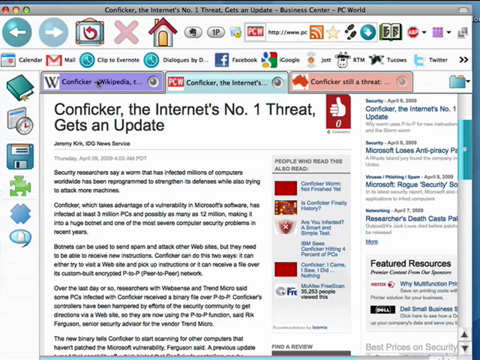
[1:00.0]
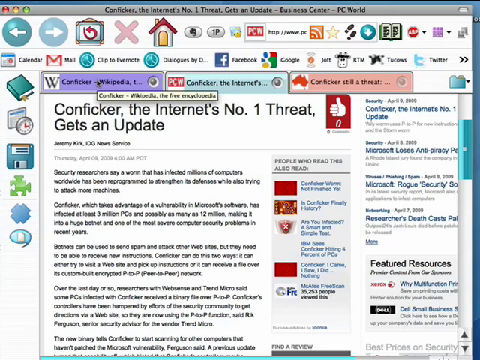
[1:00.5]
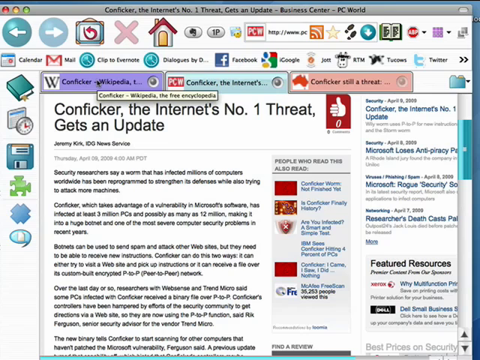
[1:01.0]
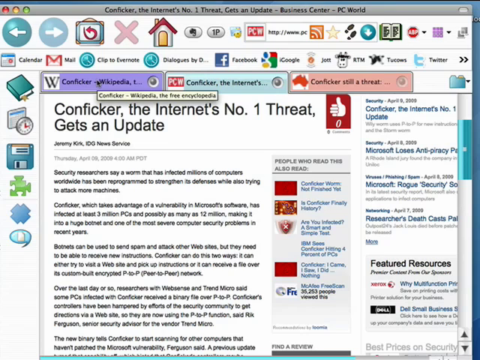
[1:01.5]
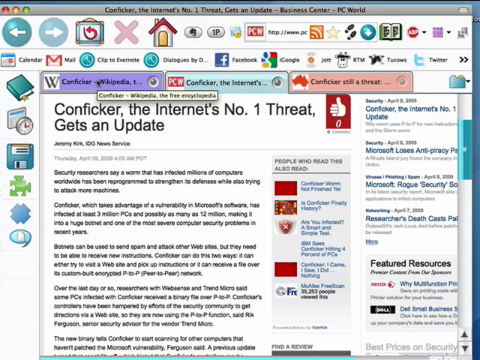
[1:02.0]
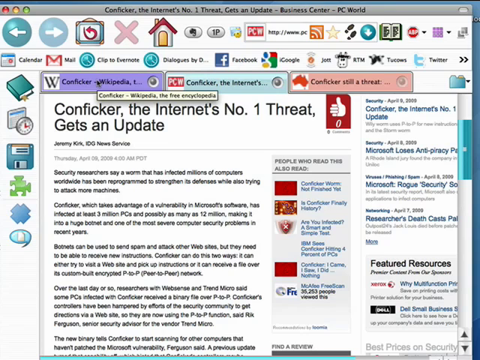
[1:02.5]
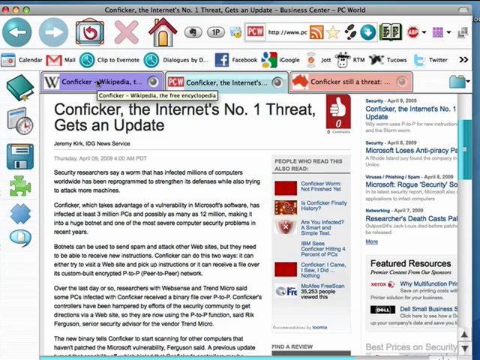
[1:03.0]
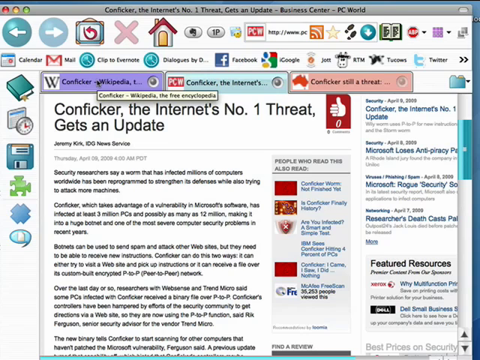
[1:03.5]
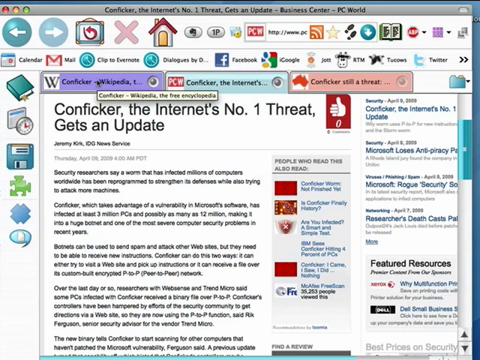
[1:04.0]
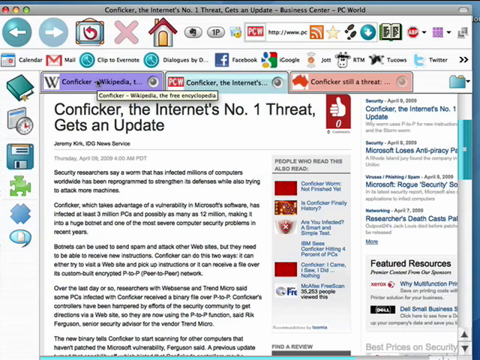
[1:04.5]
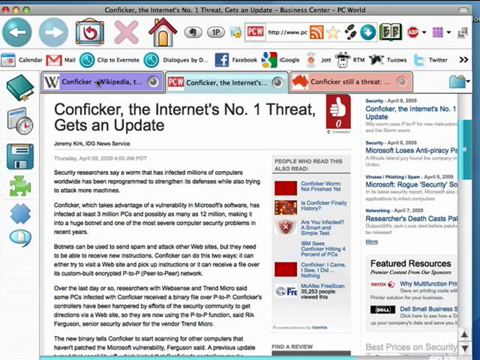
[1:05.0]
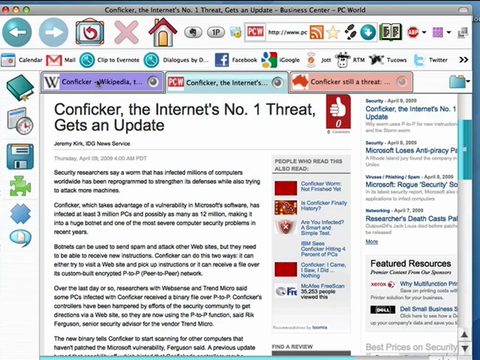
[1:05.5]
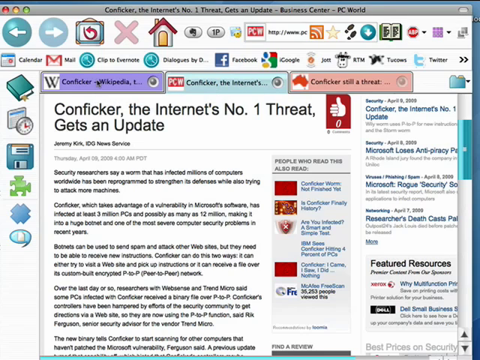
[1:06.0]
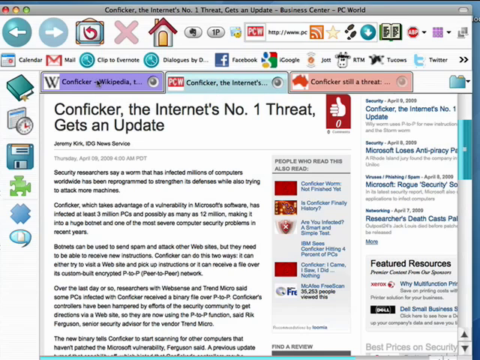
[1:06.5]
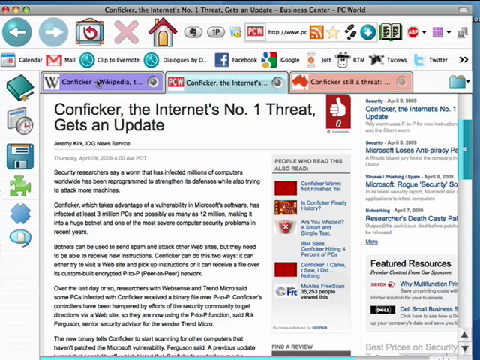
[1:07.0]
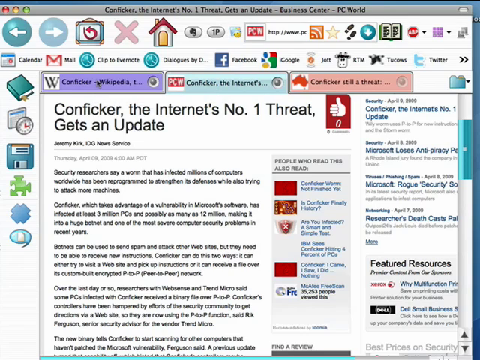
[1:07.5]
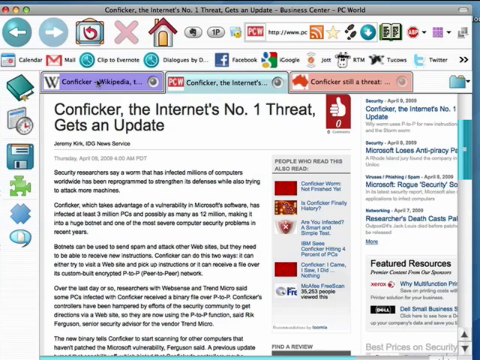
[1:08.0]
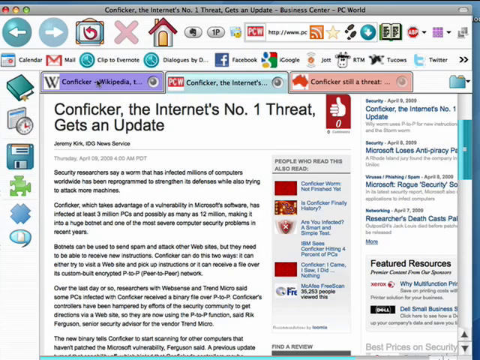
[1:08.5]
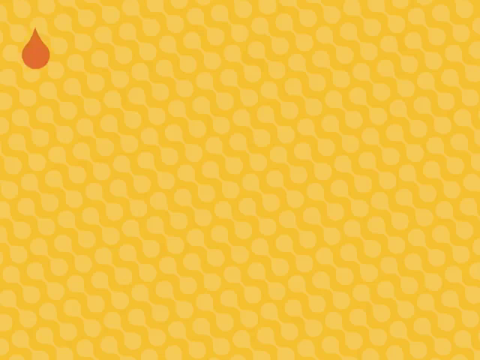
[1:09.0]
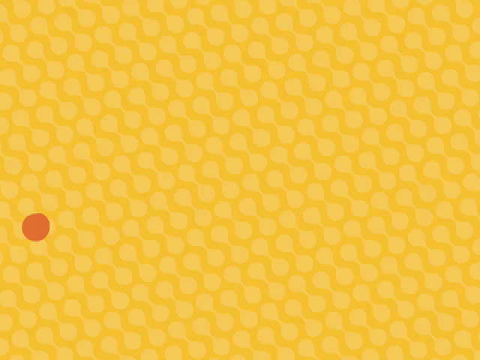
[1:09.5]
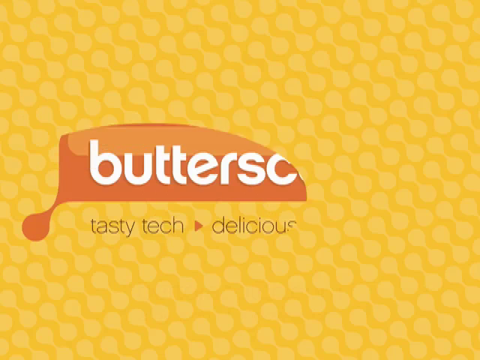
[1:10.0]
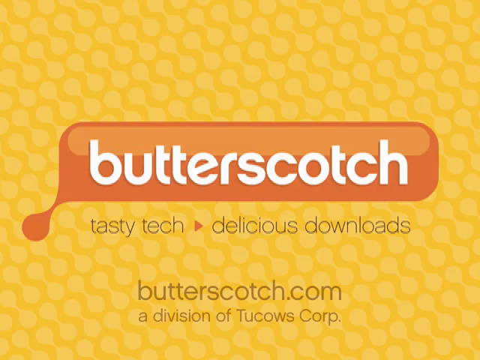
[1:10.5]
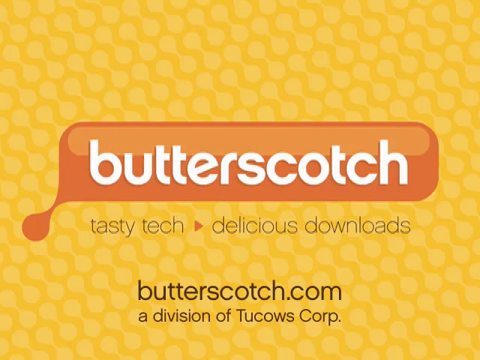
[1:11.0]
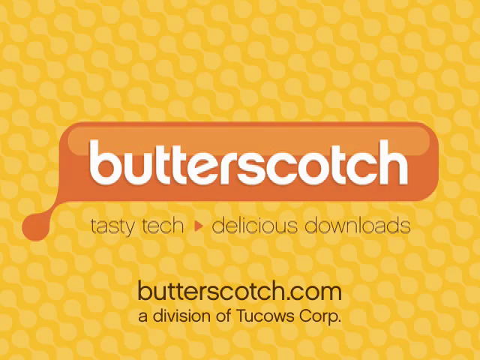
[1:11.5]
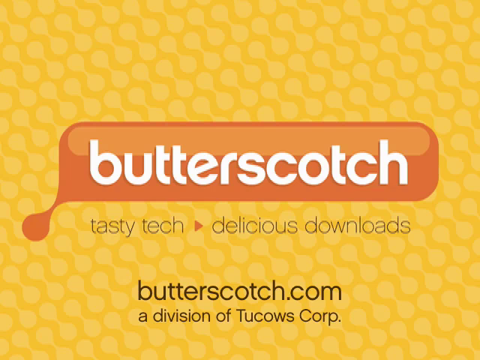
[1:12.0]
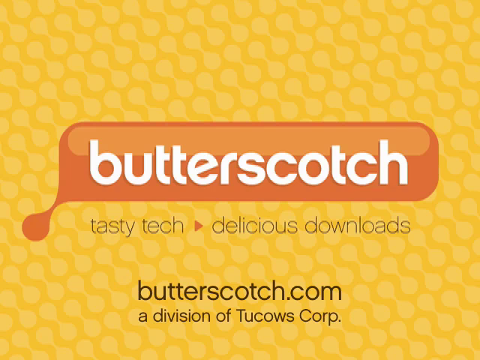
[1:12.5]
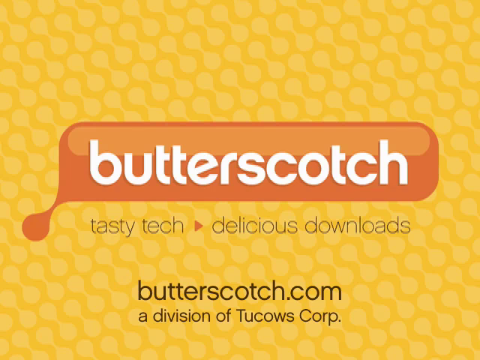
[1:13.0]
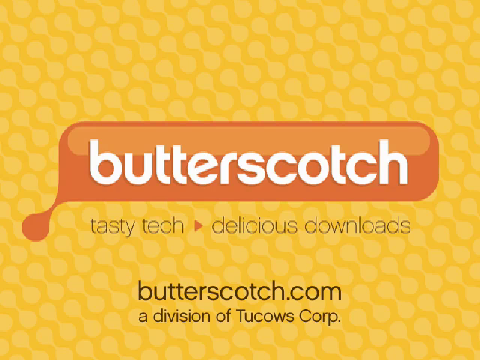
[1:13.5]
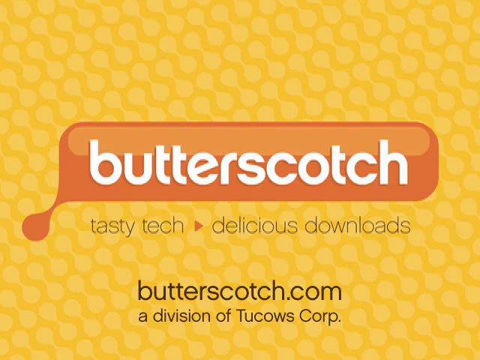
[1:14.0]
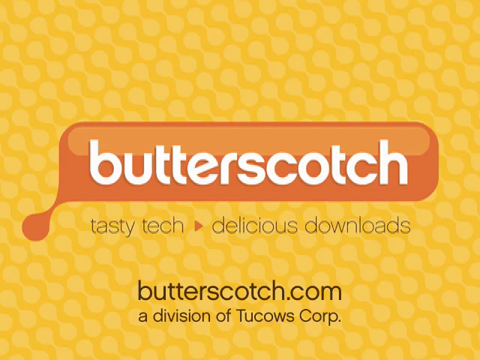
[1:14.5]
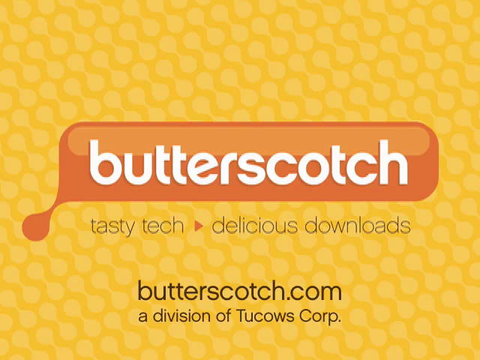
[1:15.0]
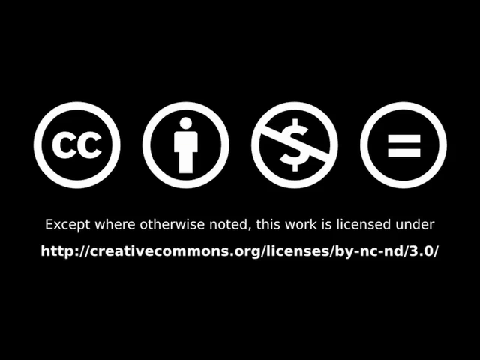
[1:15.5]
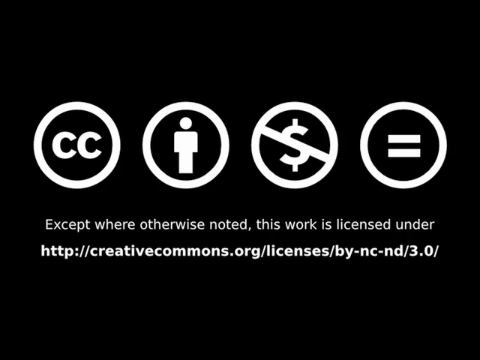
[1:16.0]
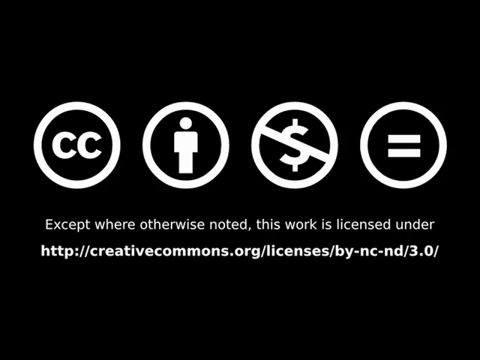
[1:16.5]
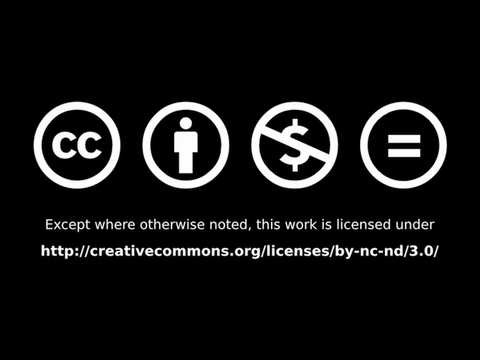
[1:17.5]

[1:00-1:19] The web page is open on its second tab, "Conficker, the internet's number one threat gets an update", the second of three tabs. The black mouse hovers over the first tab, the Conficker Wikipedia page, and the hover shows a small comment box with the full name of the tab in black letters on a white background. Next, the yellow background with the repeated, diagonally arranged dumbbell-shaped pattern appears, and a brown drop is dropped onto it. A rectangular comment box expands from the drop showing the word "butterscotch", below which "tasty tech", followed by a small right arrow and "delicious downloads", is written in black. Below that is written "butterscotch.com a division of tucows corp." A black screen follows, showing various icons such as CC, a no-dollar sign, an equals sign and a white figure of a man inside a circle, with an HTTP website given below, apparently indicating that the work is licensed.